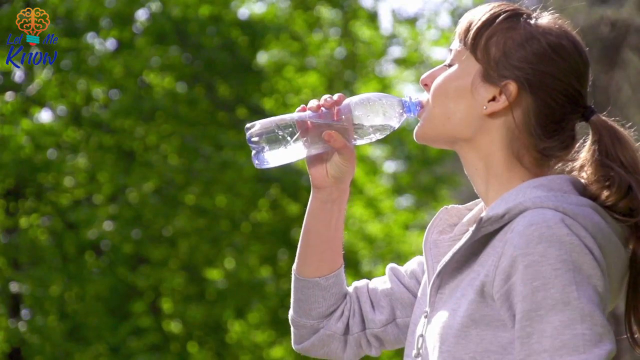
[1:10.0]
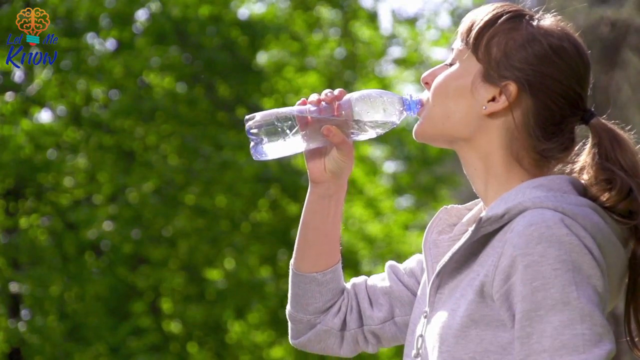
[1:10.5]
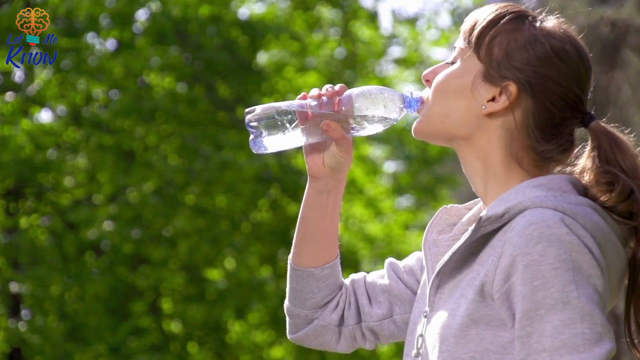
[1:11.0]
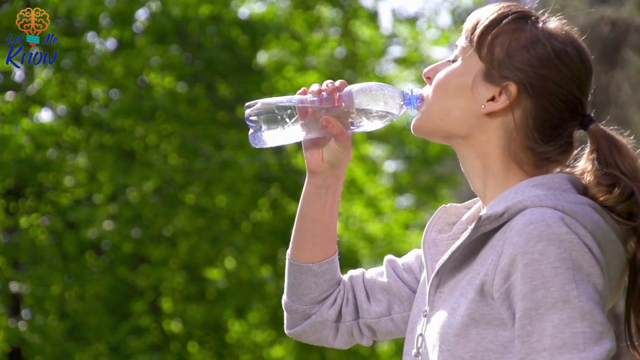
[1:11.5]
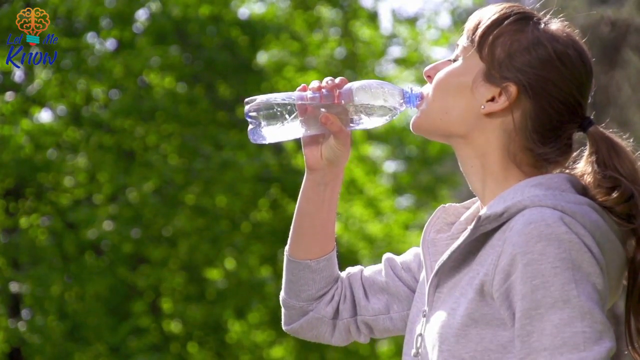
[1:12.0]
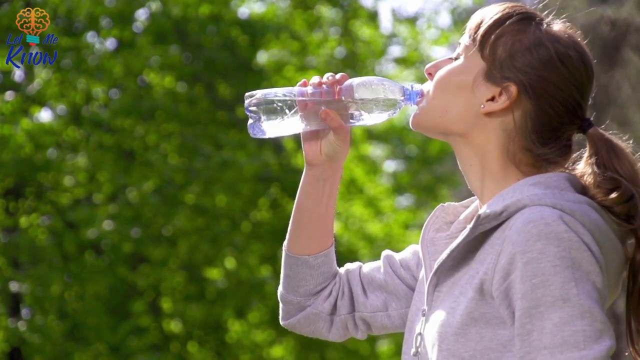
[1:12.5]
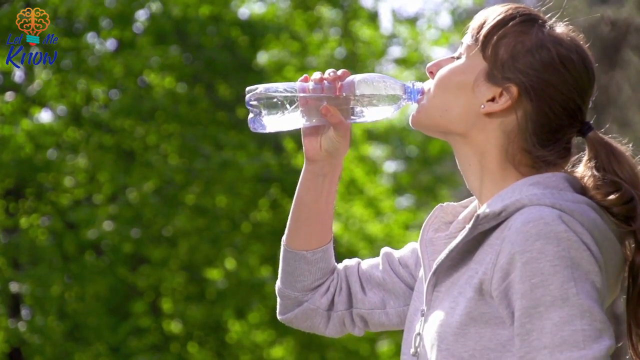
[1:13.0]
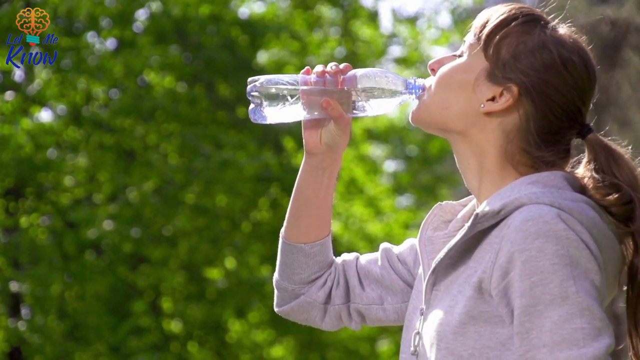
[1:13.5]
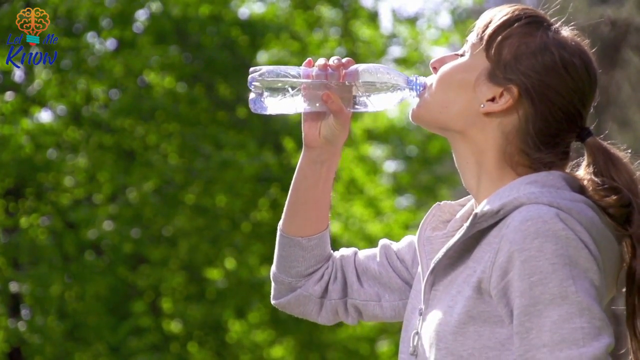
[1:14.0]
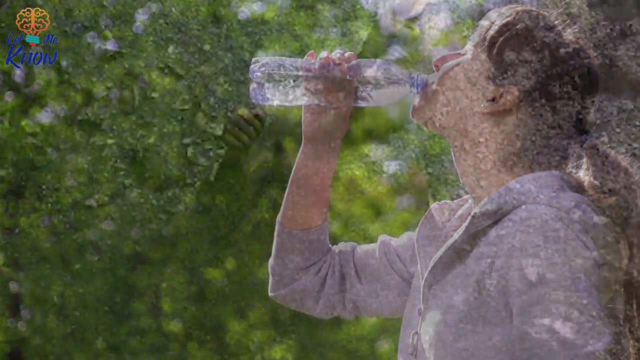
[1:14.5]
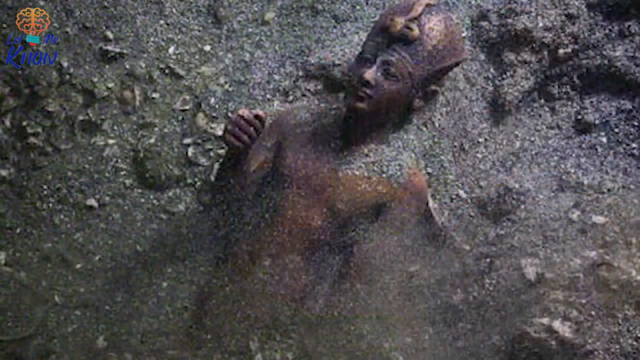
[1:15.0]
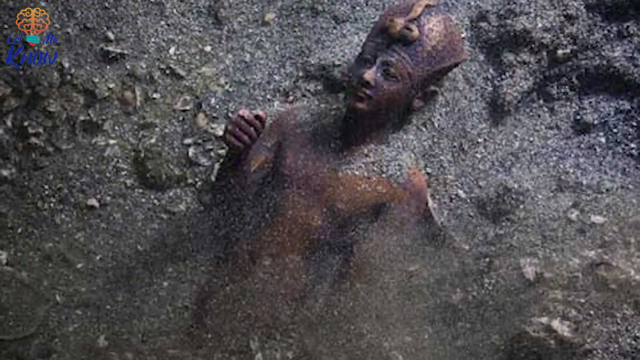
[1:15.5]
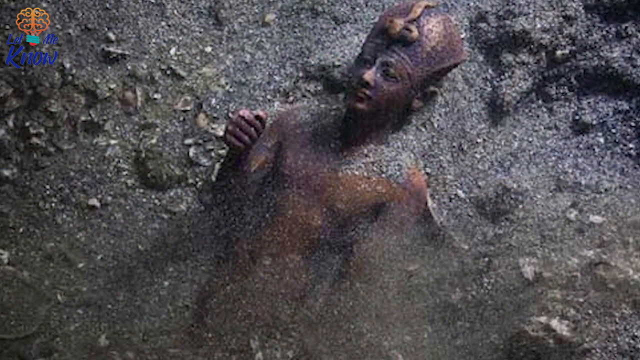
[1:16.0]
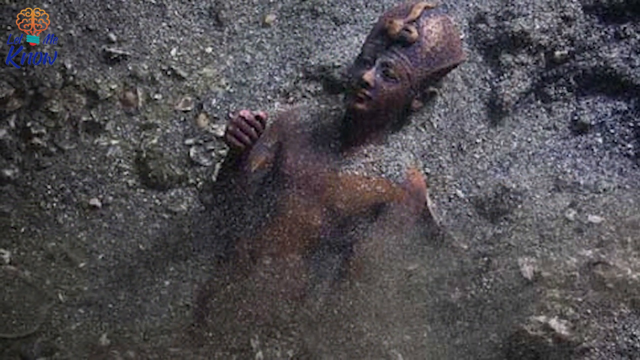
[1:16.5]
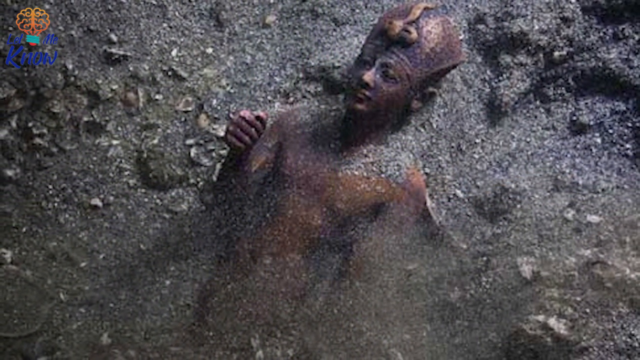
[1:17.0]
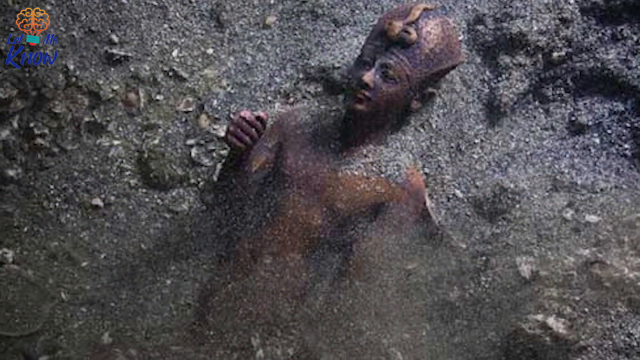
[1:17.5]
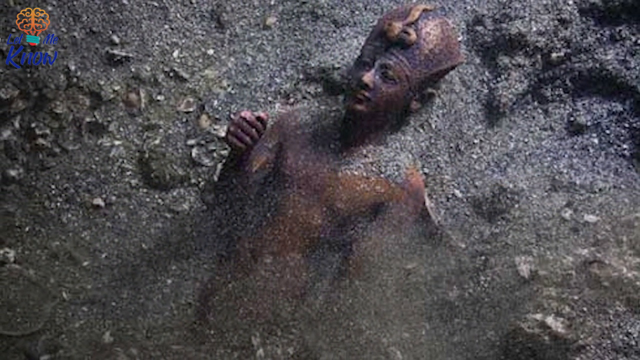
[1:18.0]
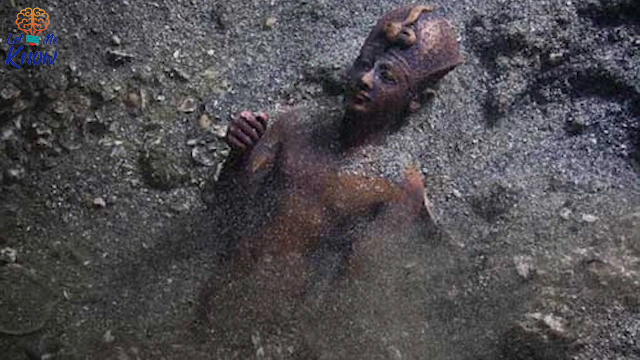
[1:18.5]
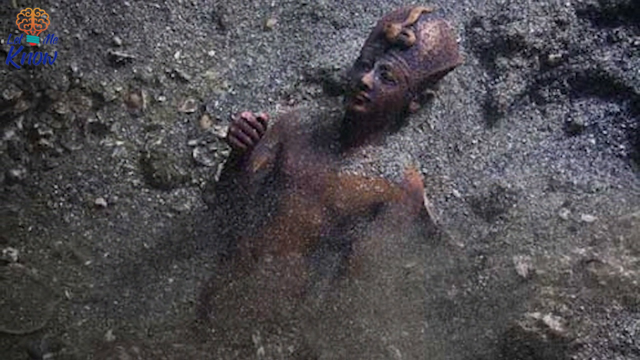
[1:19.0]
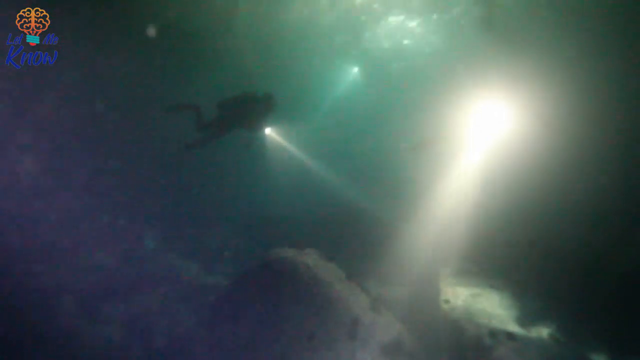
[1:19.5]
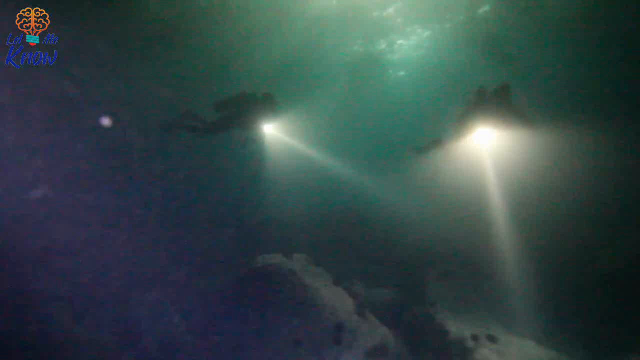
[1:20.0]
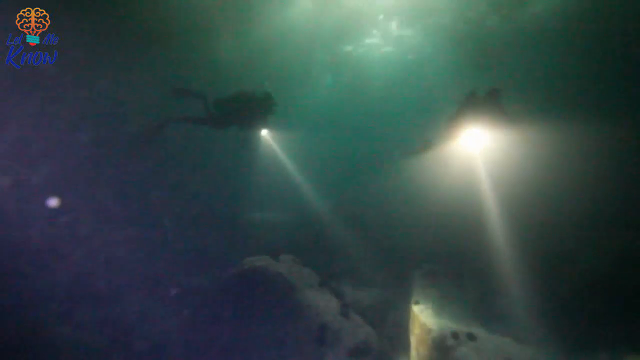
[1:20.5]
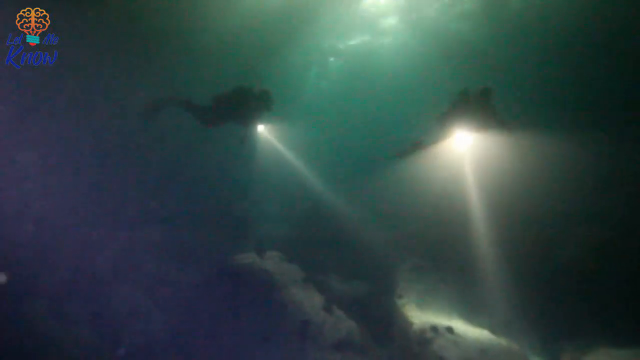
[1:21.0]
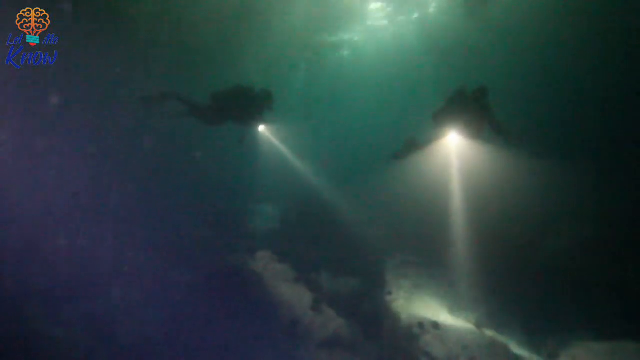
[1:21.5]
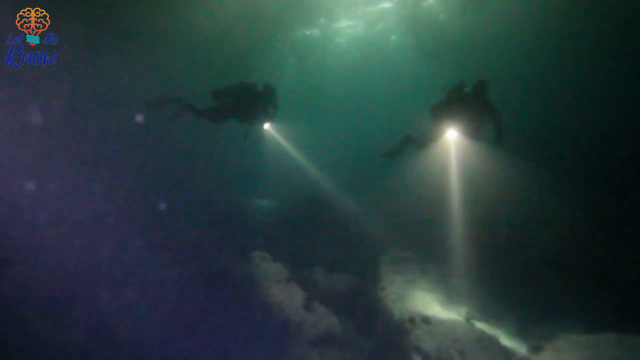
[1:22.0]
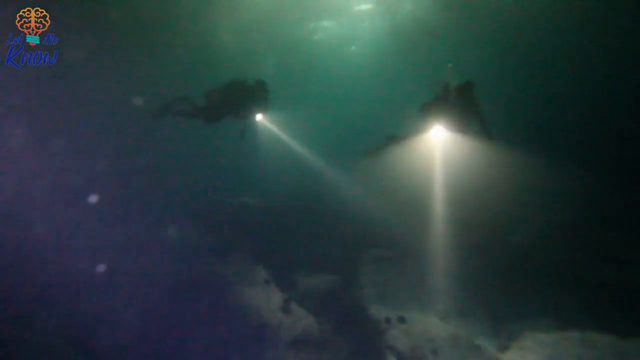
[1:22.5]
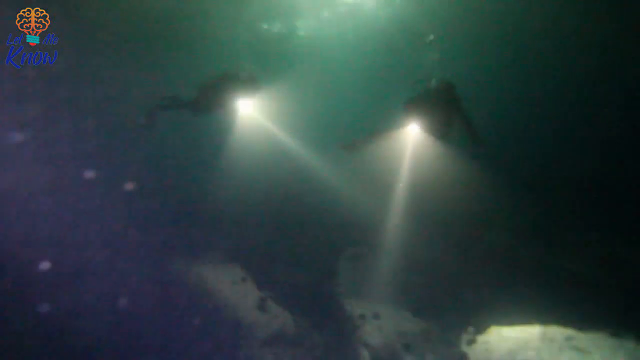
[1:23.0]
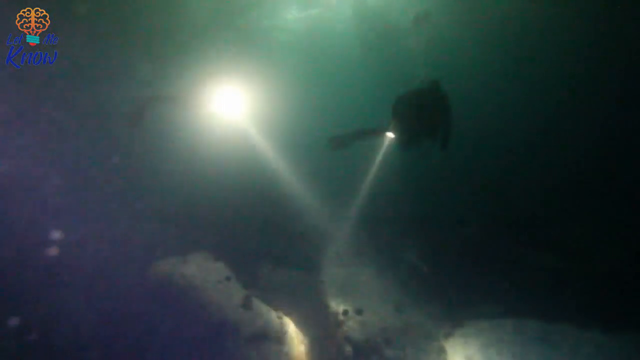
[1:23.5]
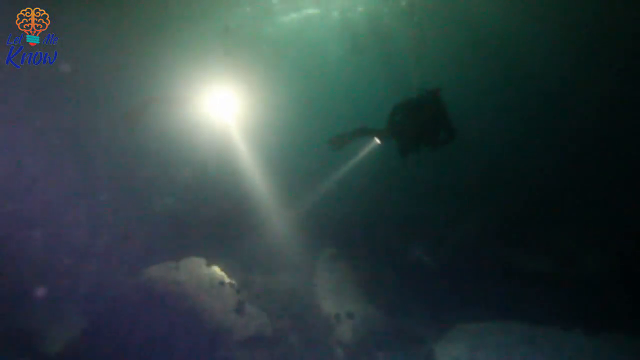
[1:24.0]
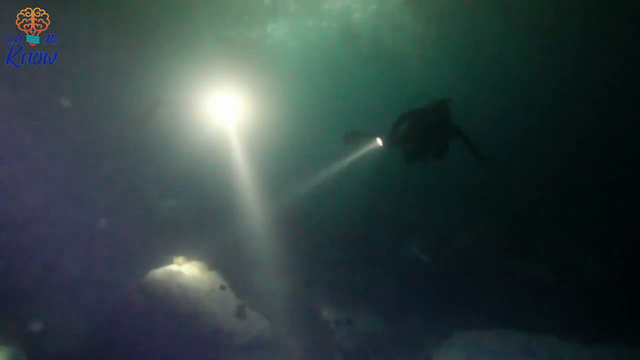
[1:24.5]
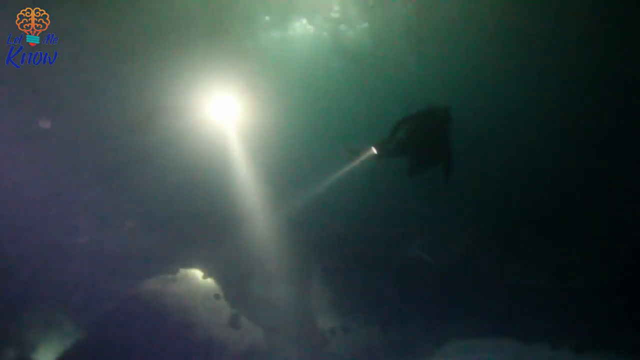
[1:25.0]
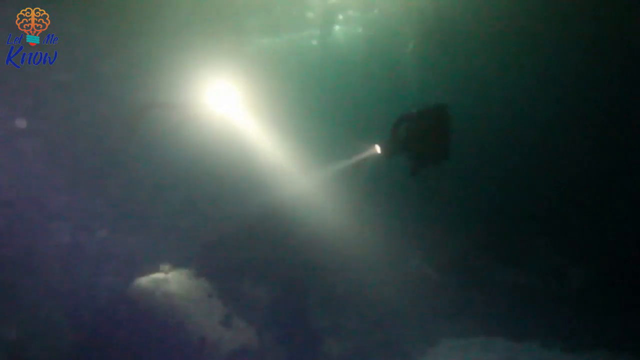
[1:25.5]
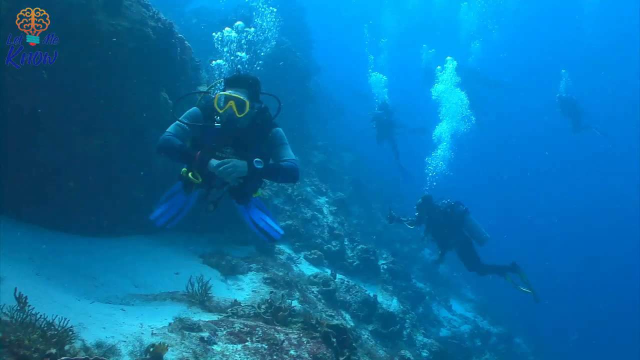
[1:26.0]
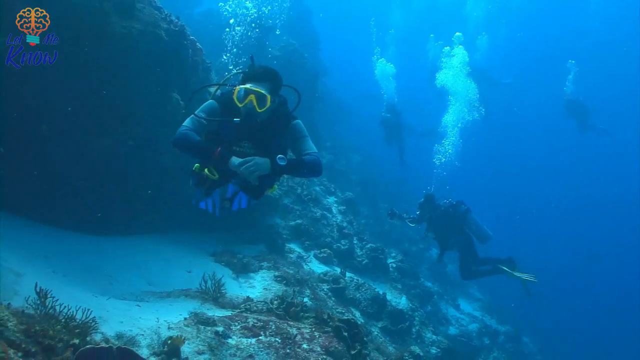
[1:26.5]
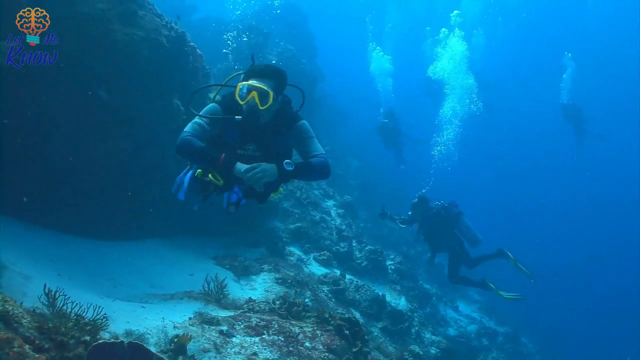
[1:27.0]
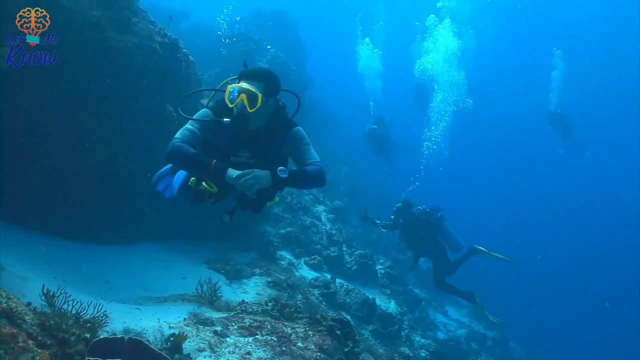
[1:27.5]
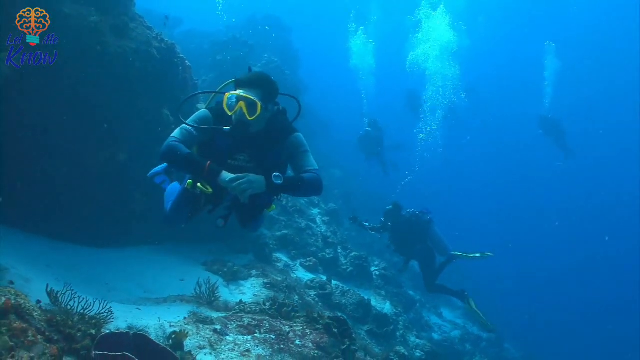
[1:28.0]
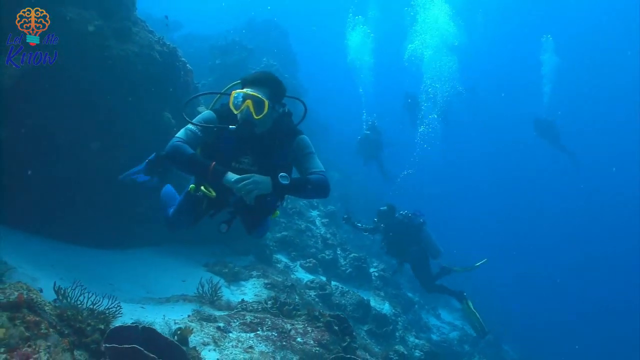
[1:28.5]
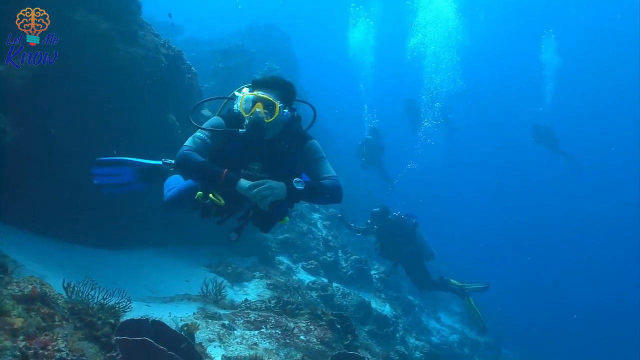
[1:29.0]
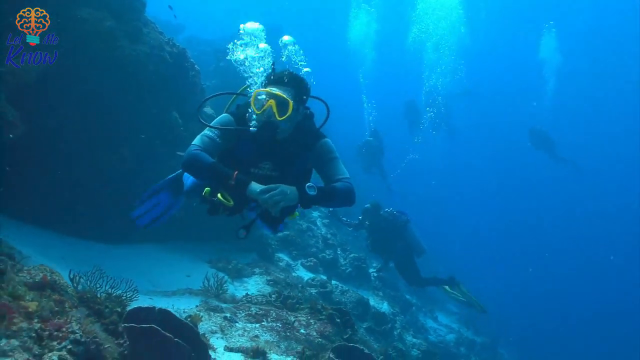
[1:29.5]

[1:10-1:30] Someone drinks from a plastic bottle. The statue then appears, apparently covered in all sorts of debris. Scuba divers scope the bottom of the sea, looking around with their flashlights as if trying to find something. The scene returns to scuba divers in a bluish sea, with bubbles all over. In the top left corner is the logo, which has a yellow brain and a word in blue.